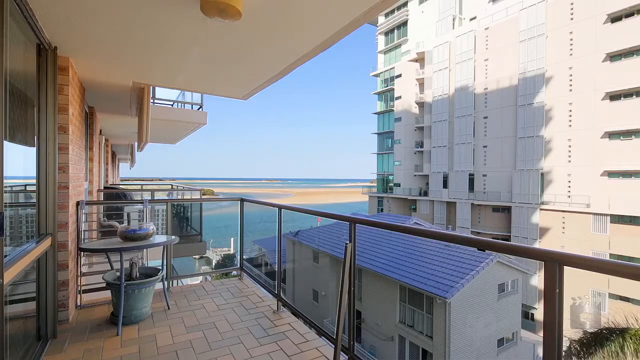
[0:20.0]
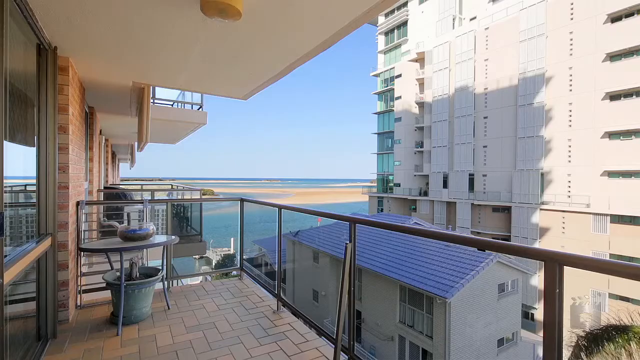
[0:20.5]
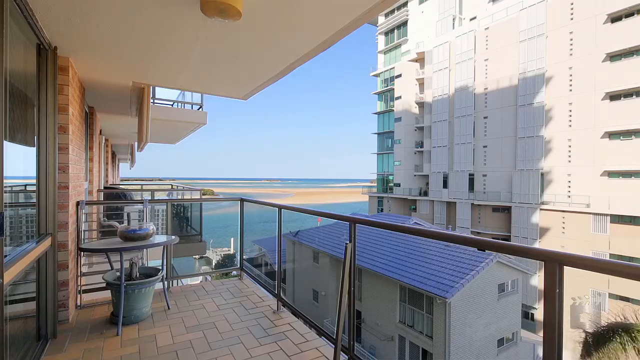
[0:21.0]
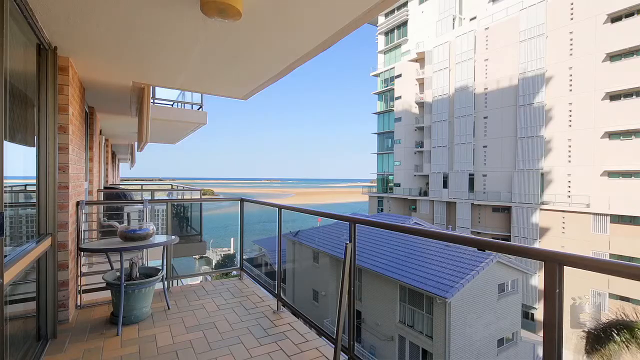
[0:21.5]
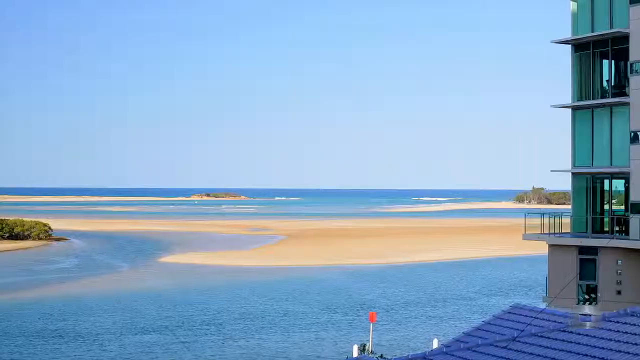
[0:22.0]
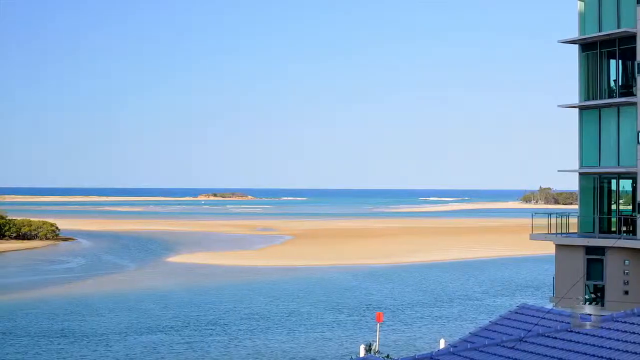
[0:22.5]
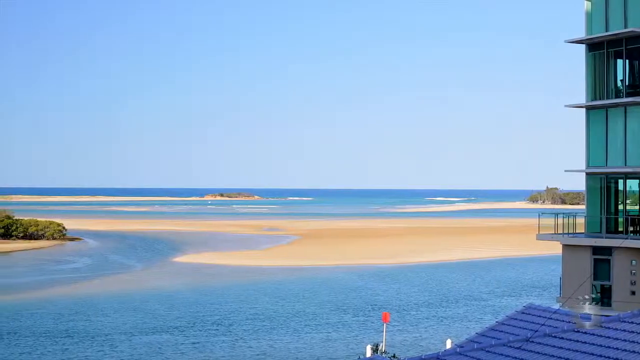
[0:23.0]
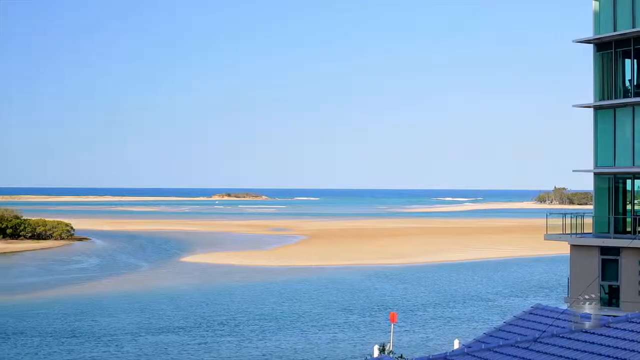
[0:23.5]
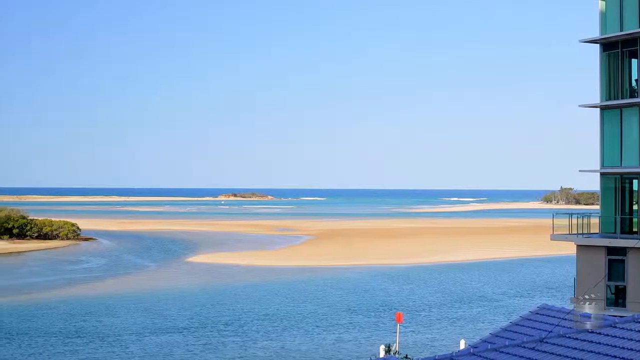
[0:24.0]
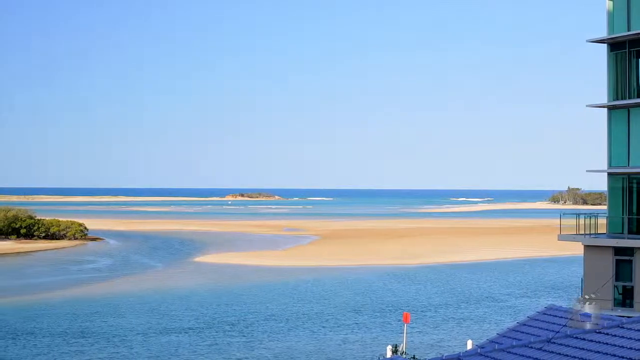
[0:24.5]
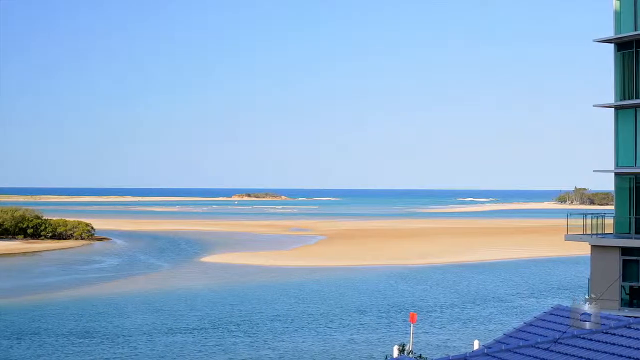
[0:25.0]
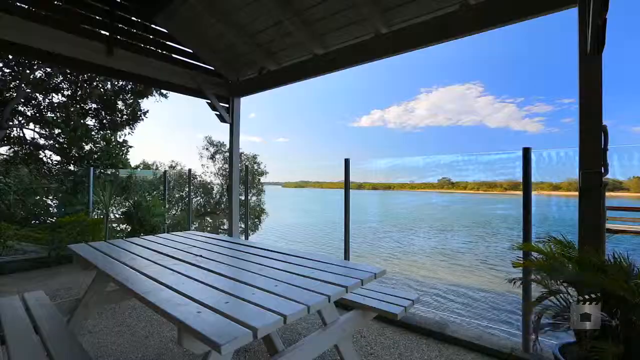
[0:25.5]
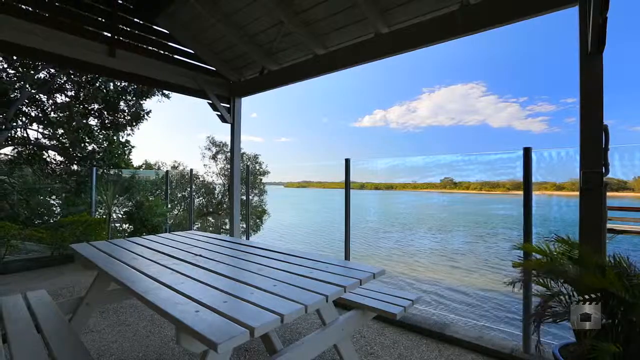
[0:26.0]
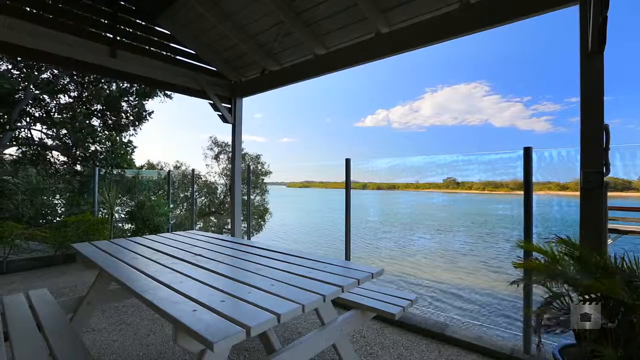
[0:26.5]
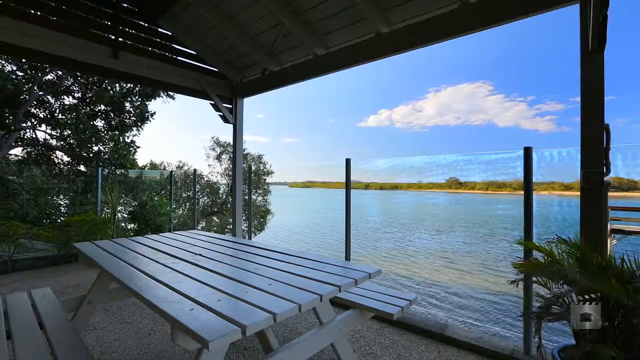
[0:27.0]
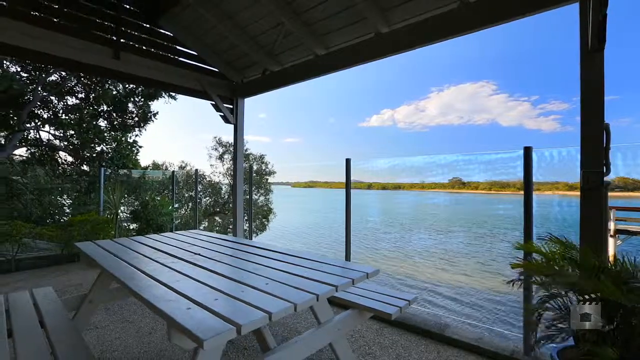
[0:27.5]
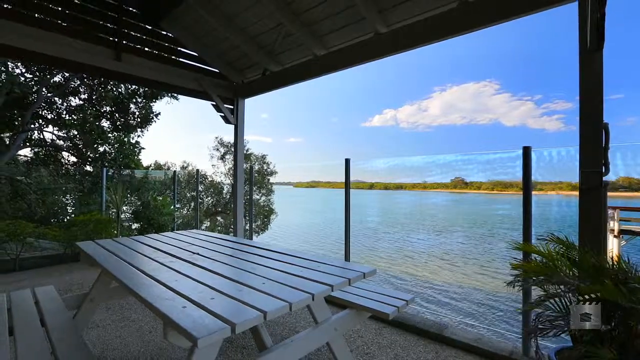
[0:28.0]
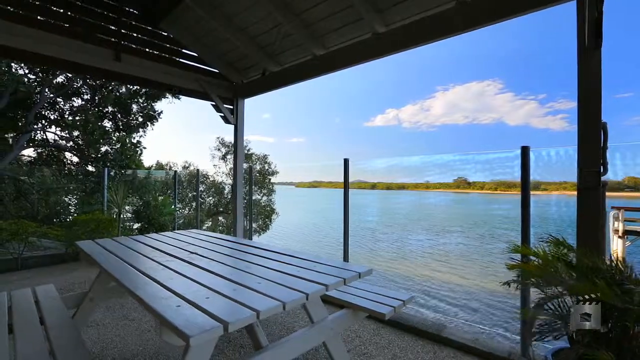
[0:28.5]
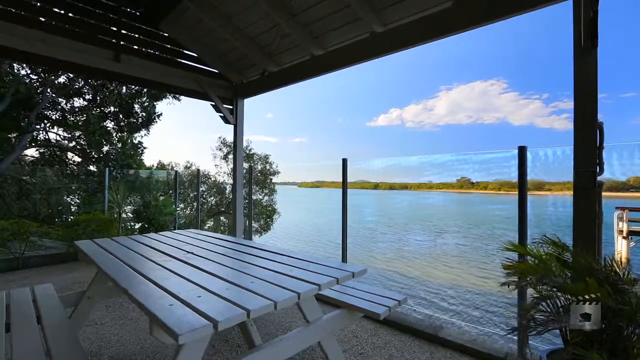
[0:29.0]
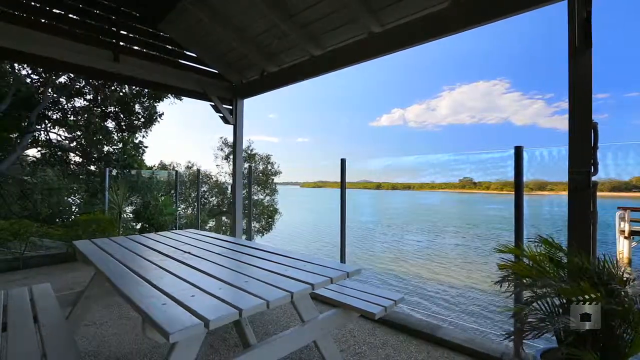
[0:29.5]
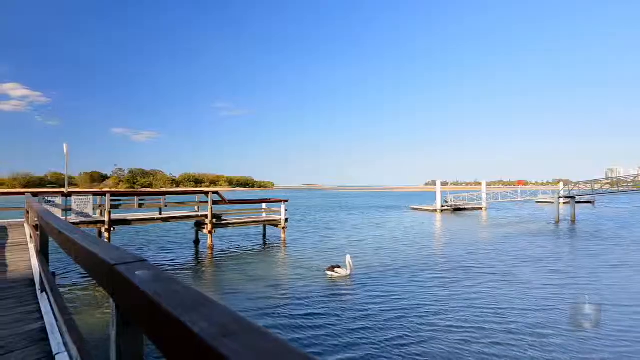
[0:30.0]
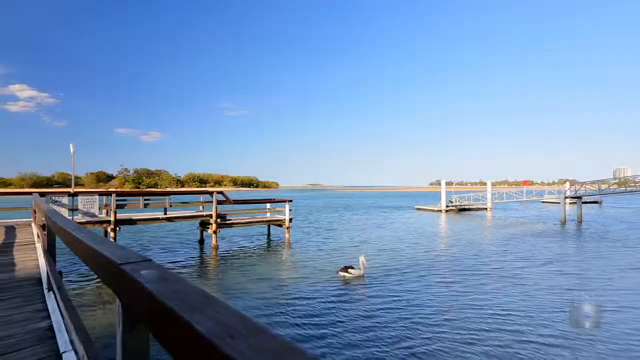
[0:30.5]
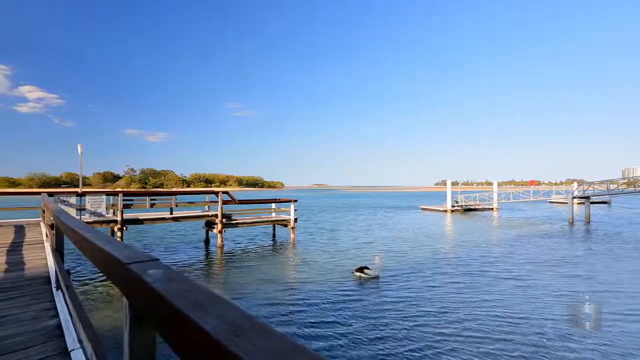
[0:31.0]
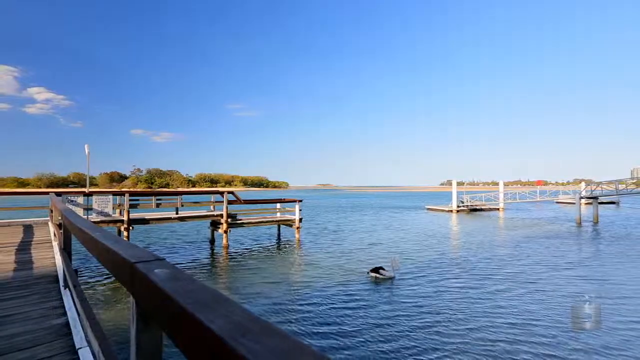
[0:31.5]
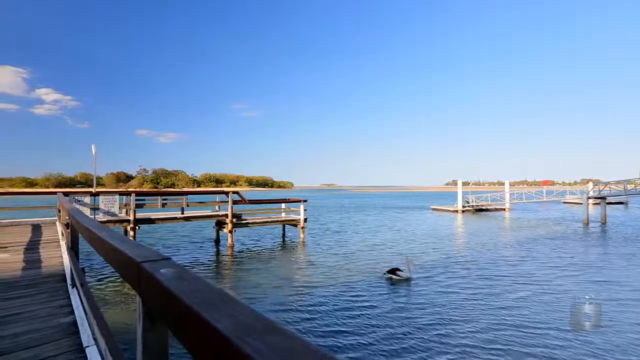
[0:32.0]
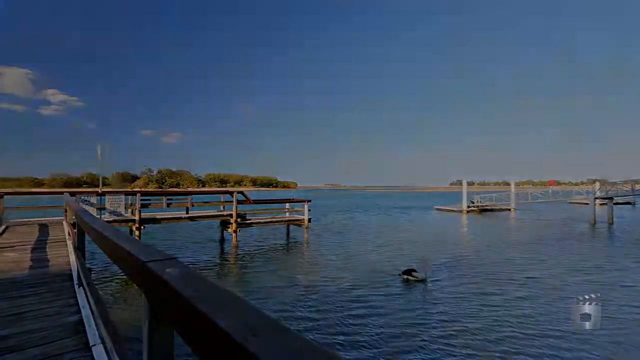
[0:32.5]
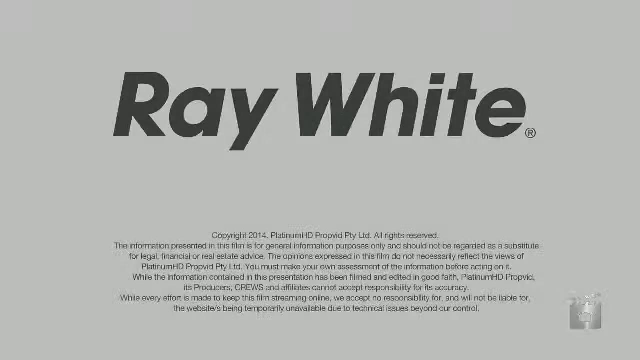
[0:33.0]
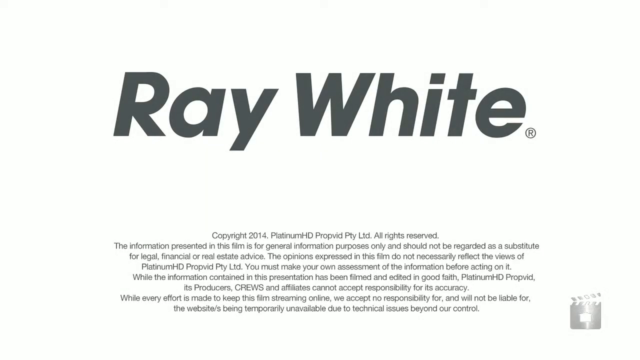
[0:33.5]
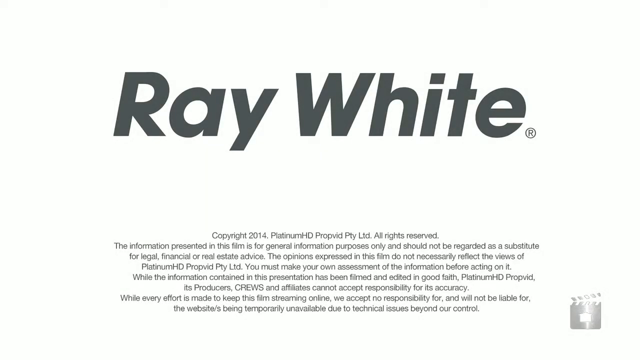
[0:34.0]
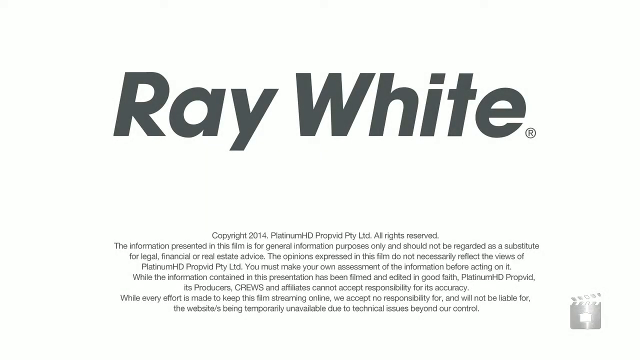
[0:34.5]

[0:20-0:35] The video begins on an apartment balcony, at the far end of the balcony. The railings are made of metal rods with glass sides, so it is possible to see through them. Also on the balcony is a round glass table with gray legs and a potted plant underneath it. From the balcony there is a view of a white sandy beach surrounded by clear blue water, under a clear blue sky. The video then cuts to a view of the beach without the balcony in the way, showing the sandy beaches and blue water. It then cuts to an outdoor picnic area with a covered roof, and then to docks and a bird swimming in the water. The final screen reads "Ray White" in large black text.